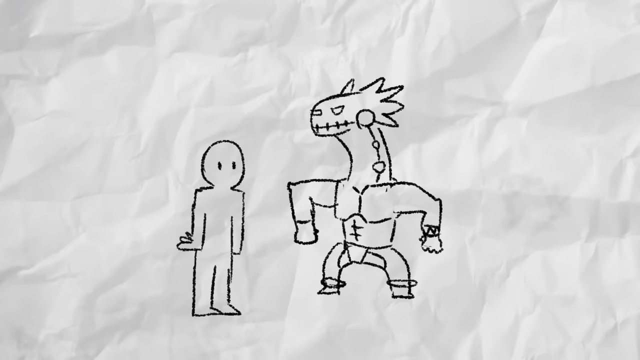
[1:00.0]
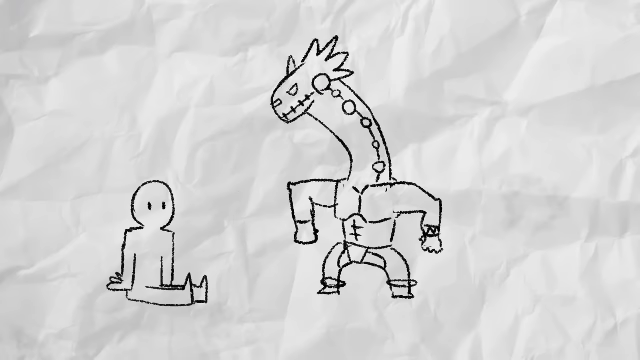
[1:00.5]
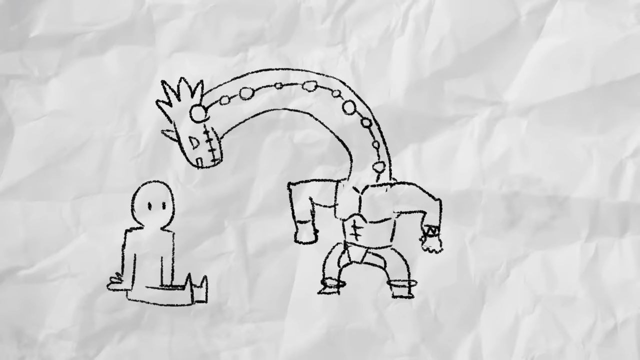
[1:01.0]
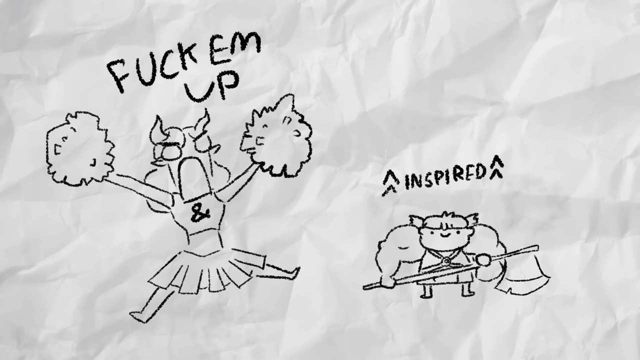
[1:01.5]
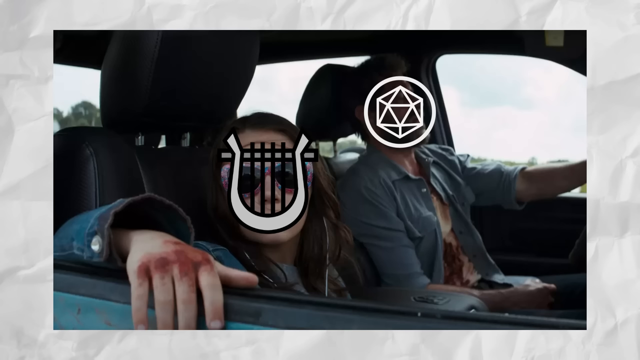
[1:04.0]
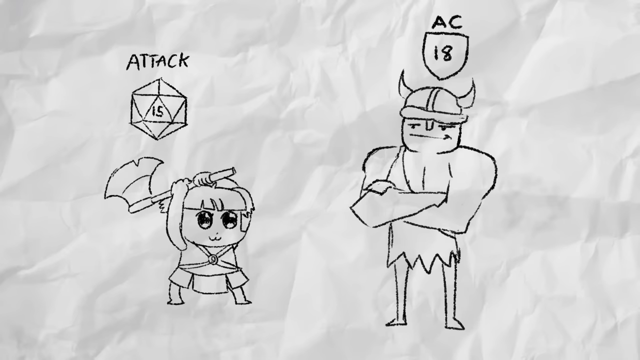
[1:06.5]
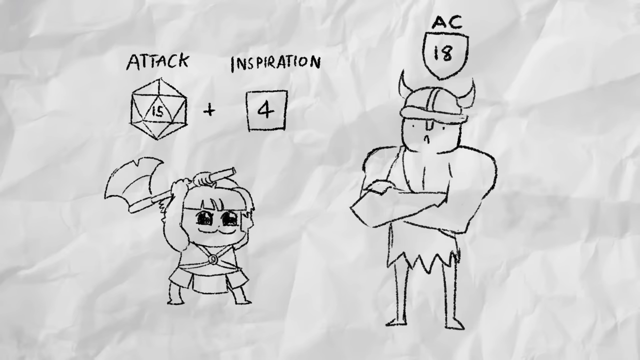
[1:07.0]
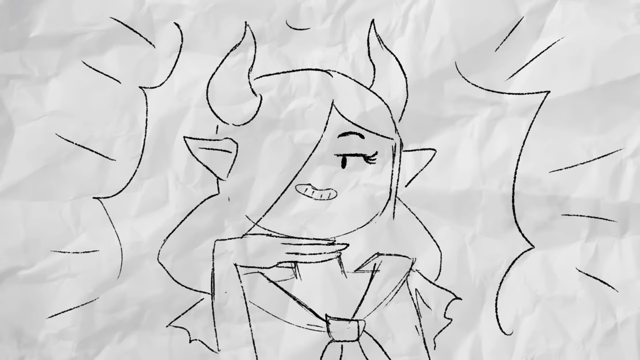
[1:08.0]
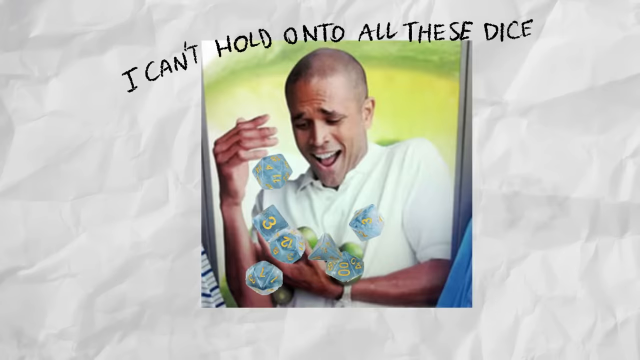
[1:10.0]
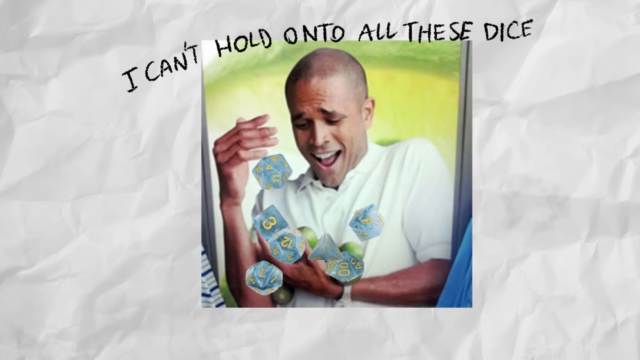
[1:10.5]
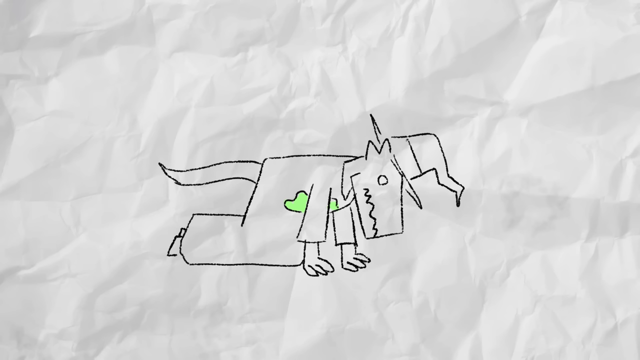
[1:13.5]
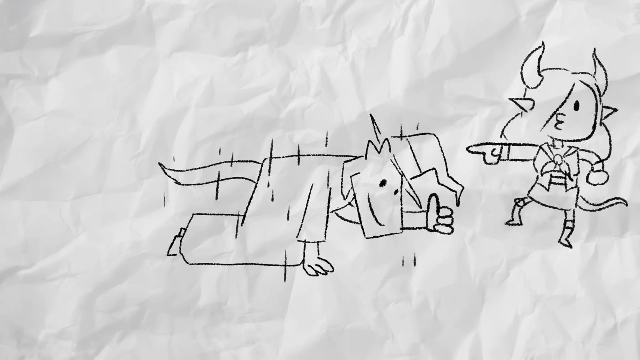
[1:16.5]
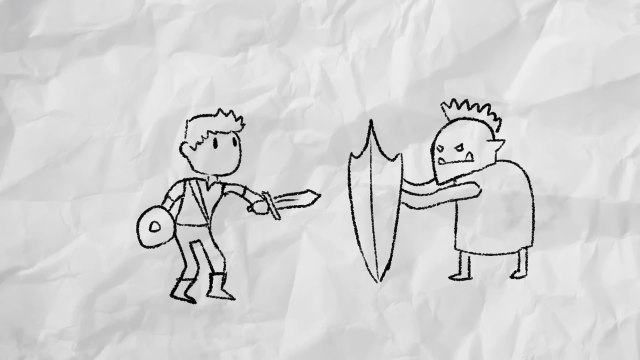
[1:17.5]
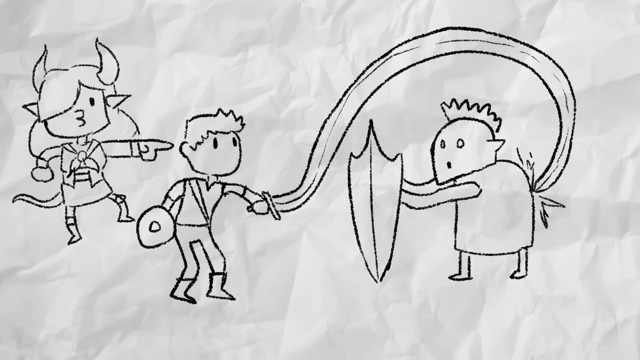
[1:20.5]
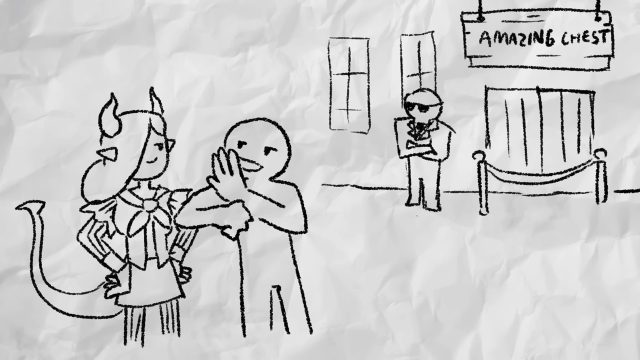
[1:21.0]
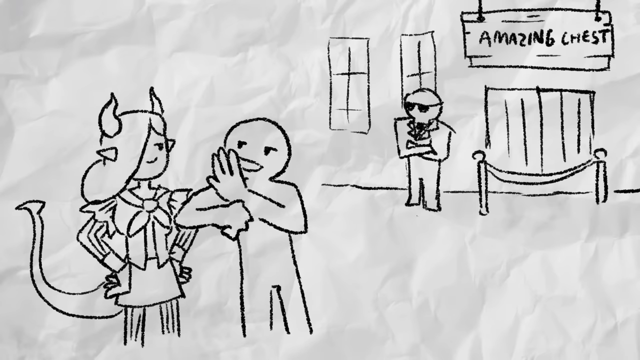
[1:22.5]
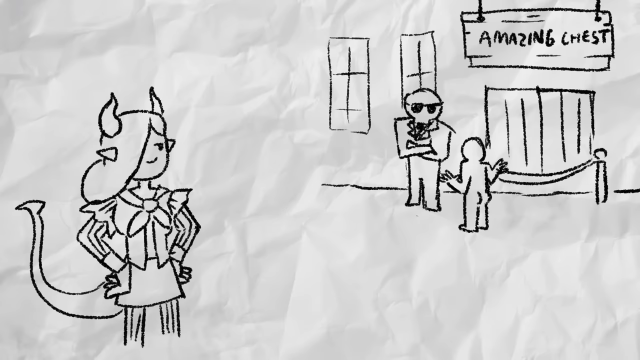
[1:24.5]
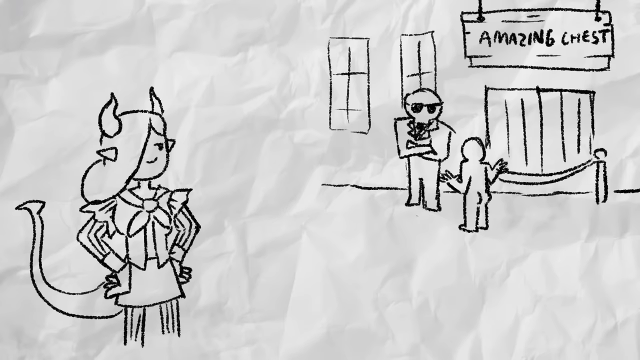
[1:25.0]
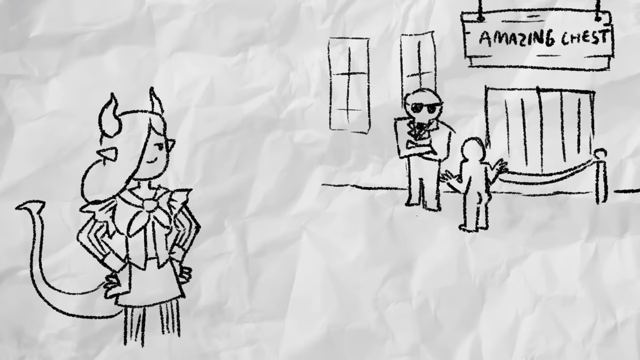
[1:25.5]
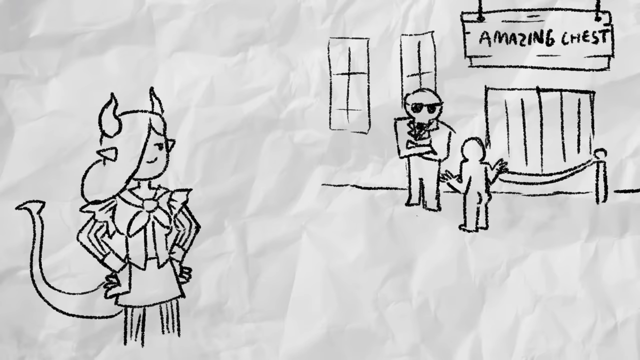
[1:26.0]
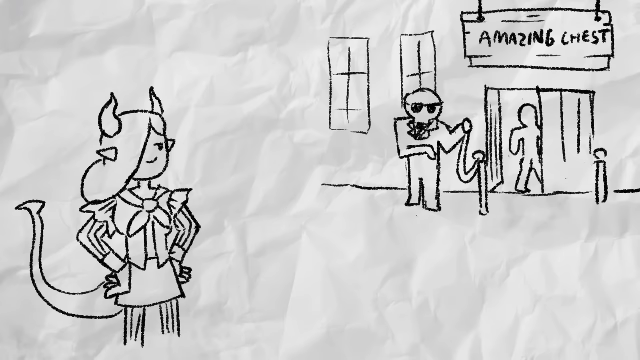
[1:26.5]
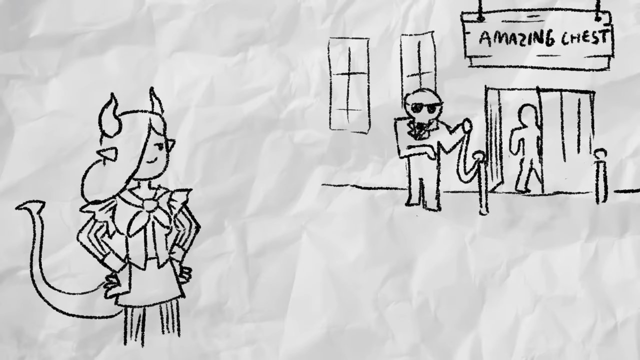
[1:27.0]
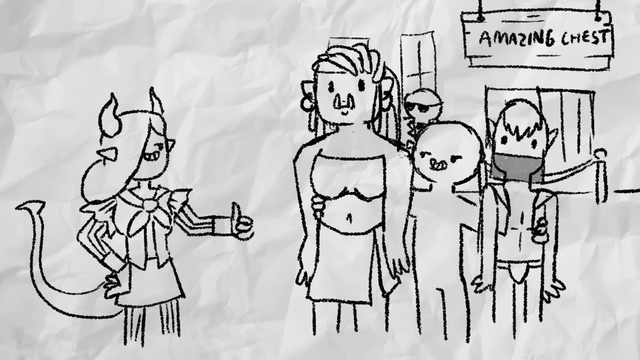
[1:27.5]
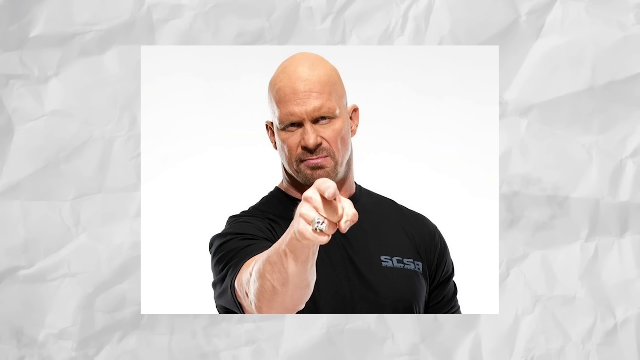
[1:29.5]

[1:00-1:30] A drawn figure of a person with only two eyes and no hair is on a white background that looks like crumpled paper. On the right, a drawn iguana-looking creature with buff muscles holds his arms pointed toward the ground in a muscle pose. In an animation, the iguana-like figure's neck stretches over to the left above the person, who is now sitting on the ground. Next, an angry cheerleader with double horns holds up two pom-poms, wearing a cheerleading outfit with an ampersand on the front of the top and a cheerleading skirt; black chalkboard-like text above her head reads "FUCK UM UP". On the right, a small drawing of a girl with pigtails and big muscular arms holds a large axe, with the text "INSPIRED" above her and two arrows pointing up on each side. Next, an image over the white crumpled paper shows two people in a car. One looks to be a little girl with red blood on her knuckles, and a black and white gate or harp logo covers her face. On the right, a man drives the car, his face covered by a circle logo with a die in the center. The frame then shows a small drawing of a girl with pigtails wielding a large axe above her head; above her is a D&D die with the number 15 on it and above that the word "attack" in the same chalkboard-like font. On the right, a man who looks like a warrior wears a hat with two horns, with a shield reading 18 above him and the letters "AC" above that. As the scene goes on, a plus sign and a box with the number four are added after the die with 15, with the word "inspiration" above. The scene changes to a drawing of a girl with devil-like horns posing with her hand under her chin and a smile on her face. Next, an image over the crumpled paper shows a bald African American man holding a bunch of D&D dice, with chalkboard-style text above him reading "I can't hold on to all these dice". After several seconds, an iguana-like figure appears on his hands and knees wearing a witch's hat; he has a long tail and some kind of green splotch on the front of his outfit. In the next shot he is still on his hands and knees but has his thumb in the air and a smile on his face, and the green splotch is gone; the left side is blank, and on the right the devil-like girl, who also has a long tail, points at him. Then a drawn boy holds a shield in one arm and a sword in the other, and on the right is a monster-like figure with a humped back, a mohawk and two fangs, holding a large shield. The boy whips his sword, which goes over the top of the monster and hits it in the back. The half-girl, half-devil figure then appears on the far left and points toward the boy and the monster. In the next scene, the half-devil girl on the left talks to a figure with no hair. On the right, a drawn security guard stands in front of a door with a line across it; a wooden sign above the door reads "Amazing Chest", and there are two windows on the left. The figure goes to the front of the line and talks to the bouncer with his hands in the air, and the bouncer opens the gate and lets him through the door. Next, the figure who walked through the door stands in the middle with his arms around the waists of a girl with long hair and another figure on the right, while the half-devil girl on the left gives a thumbs up. Finally, an image over the white crumpled paper shows Stone Cold Steve Austin pointing directly ahead.